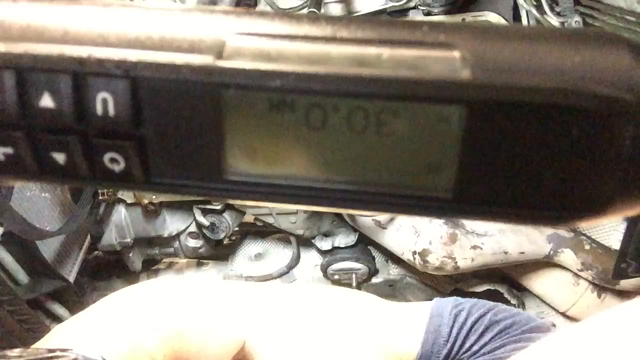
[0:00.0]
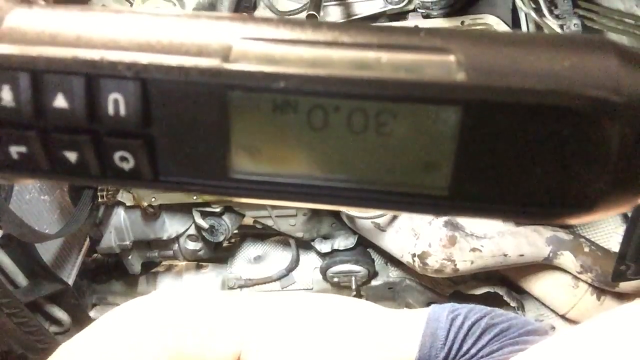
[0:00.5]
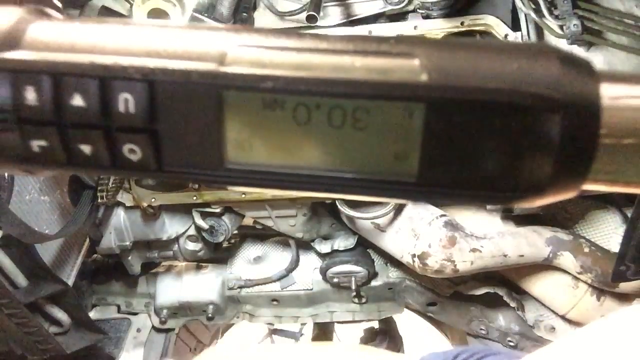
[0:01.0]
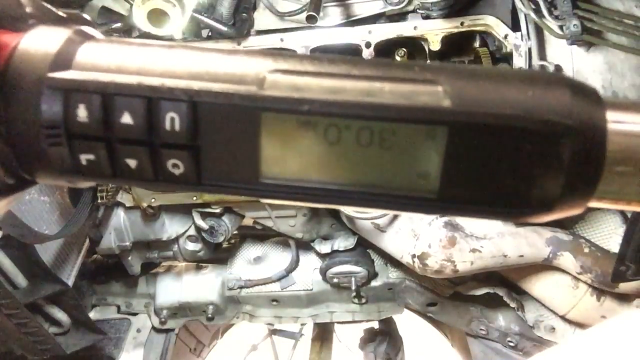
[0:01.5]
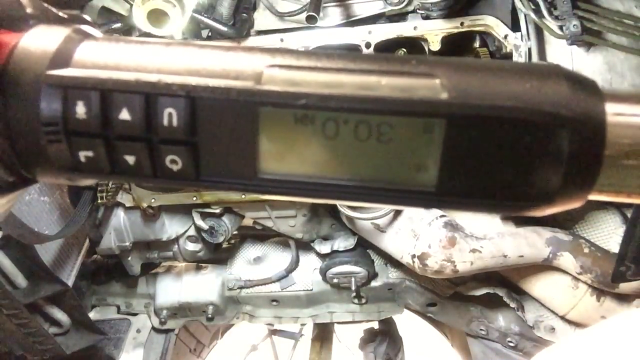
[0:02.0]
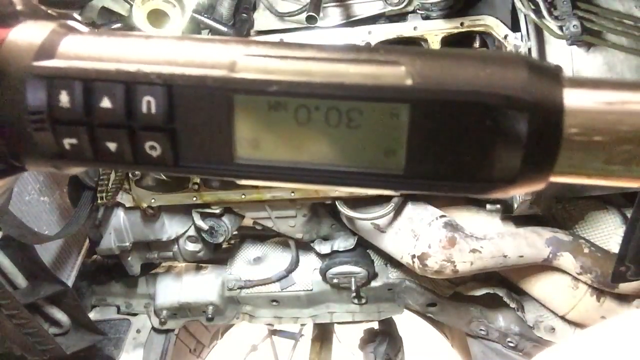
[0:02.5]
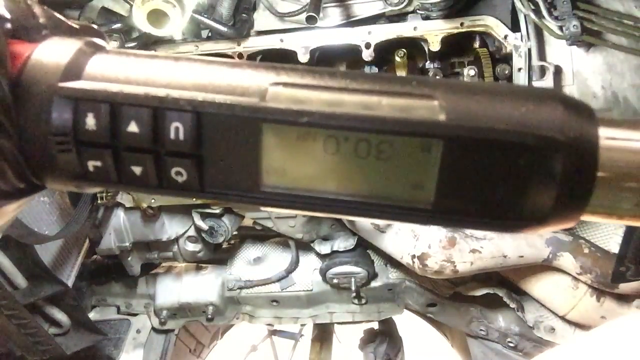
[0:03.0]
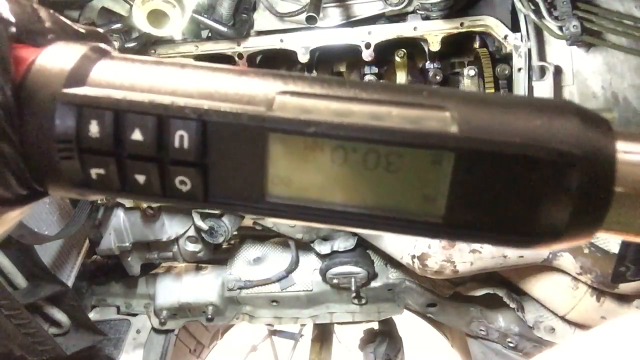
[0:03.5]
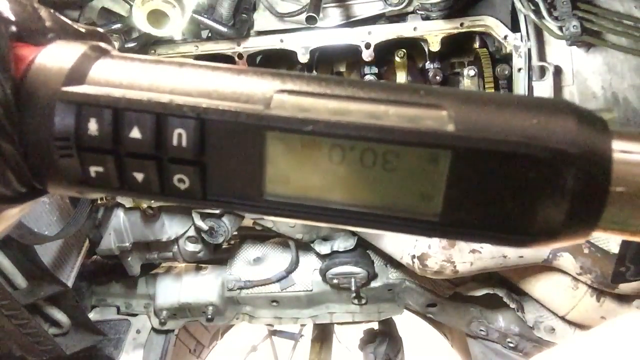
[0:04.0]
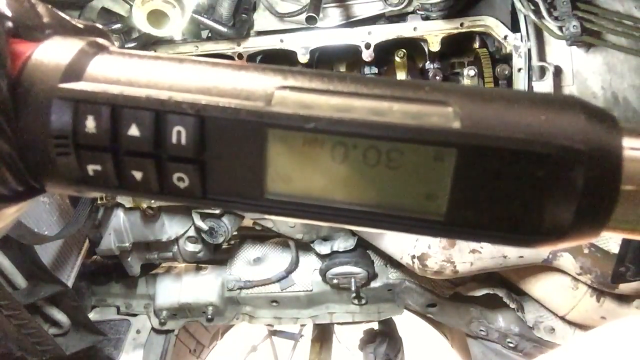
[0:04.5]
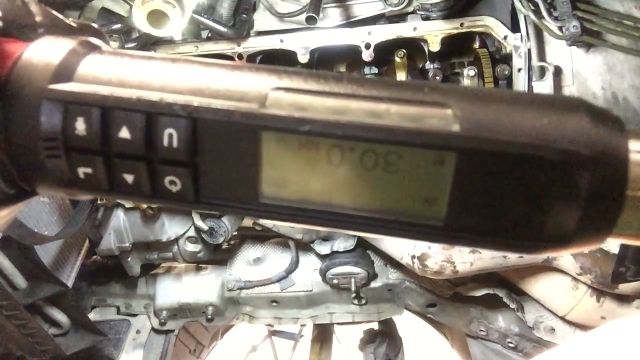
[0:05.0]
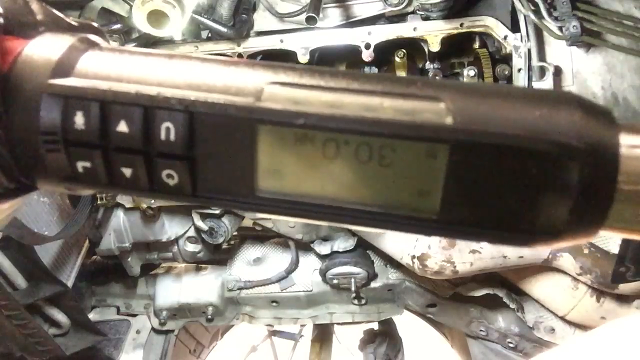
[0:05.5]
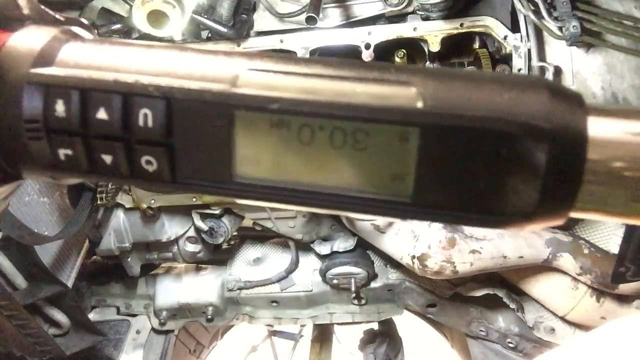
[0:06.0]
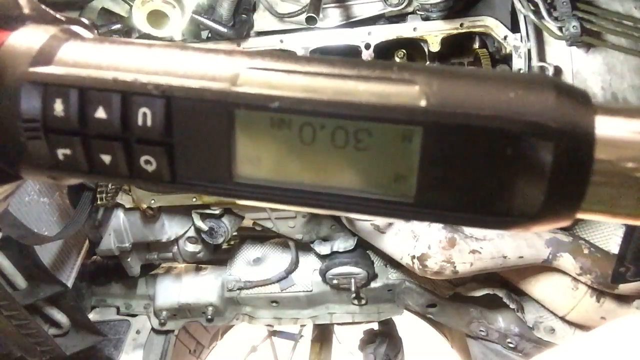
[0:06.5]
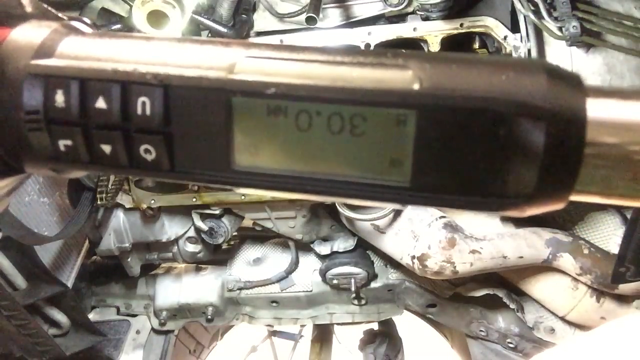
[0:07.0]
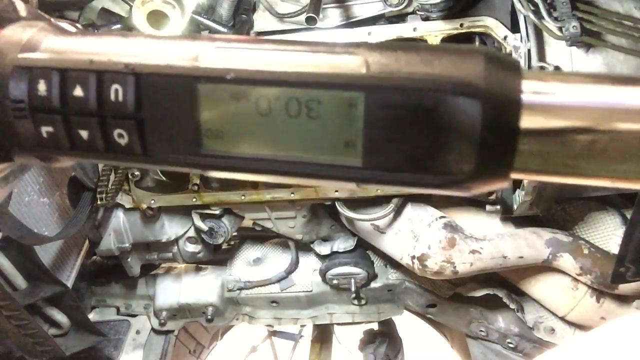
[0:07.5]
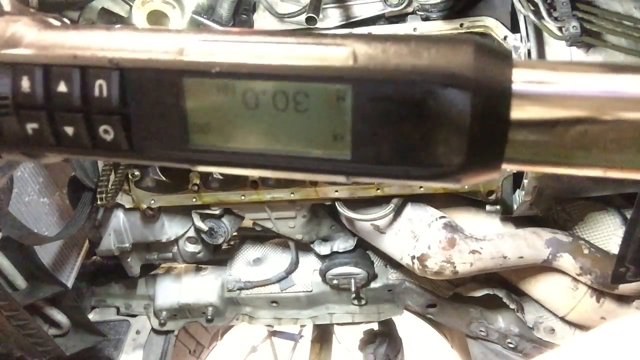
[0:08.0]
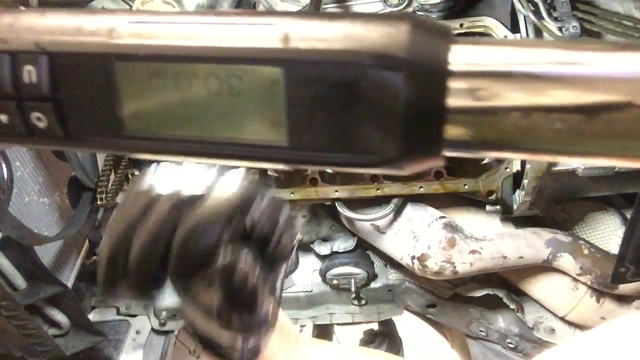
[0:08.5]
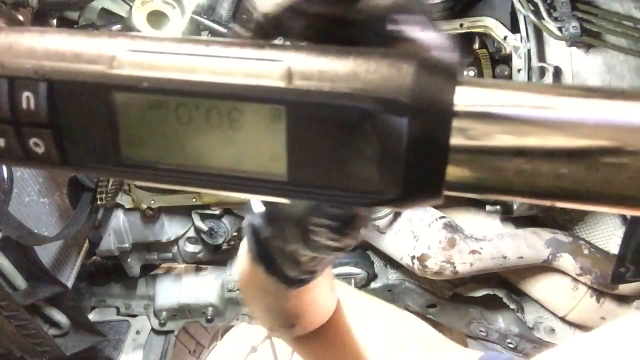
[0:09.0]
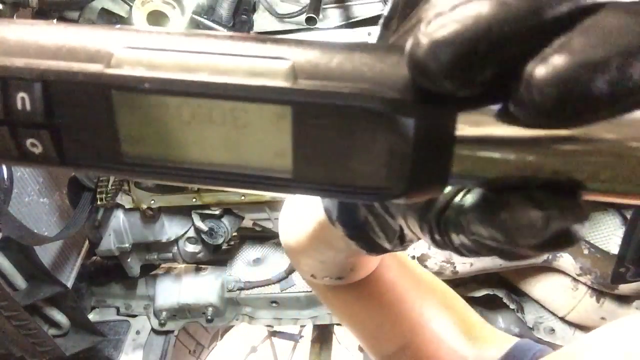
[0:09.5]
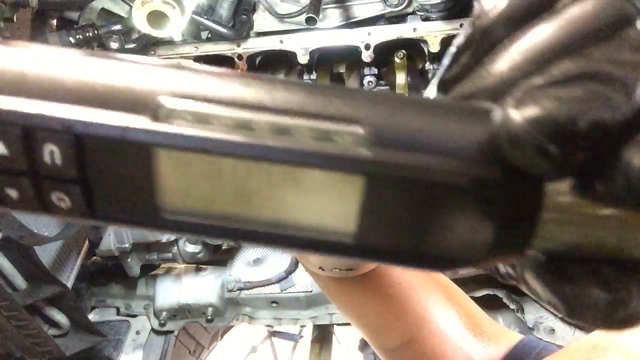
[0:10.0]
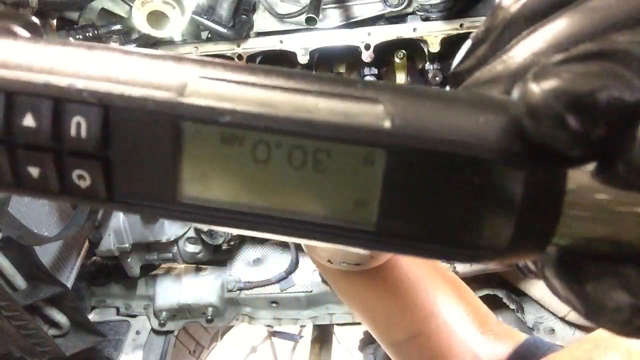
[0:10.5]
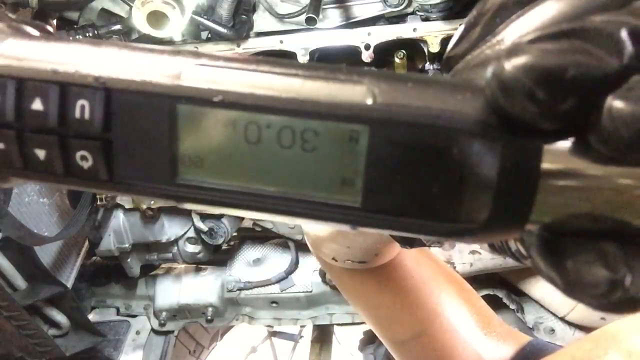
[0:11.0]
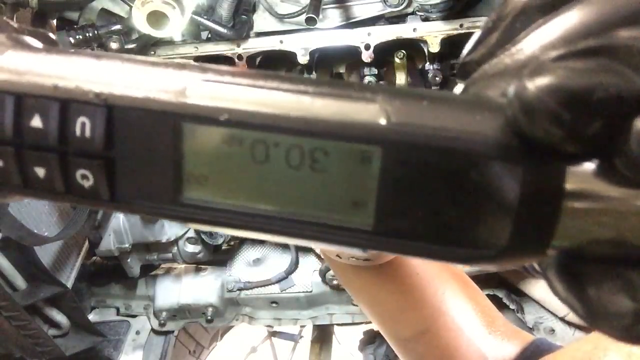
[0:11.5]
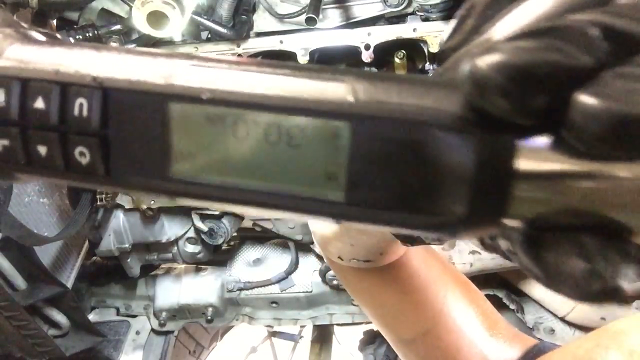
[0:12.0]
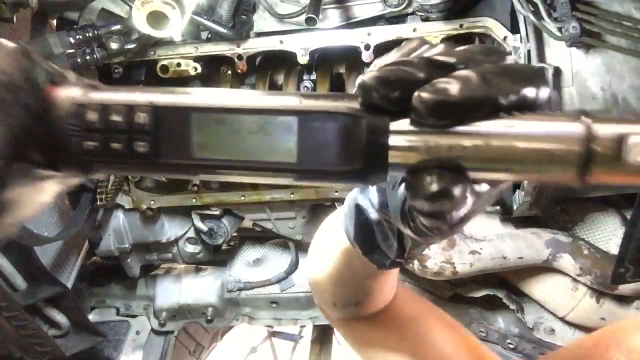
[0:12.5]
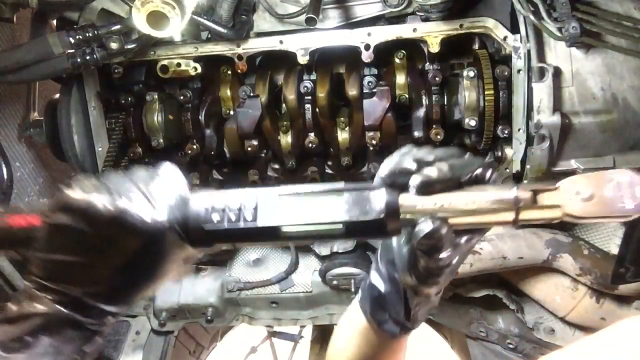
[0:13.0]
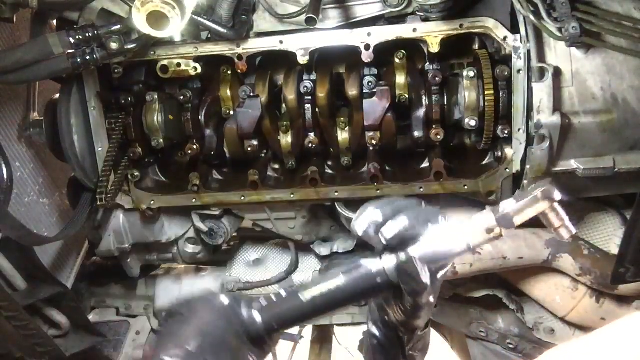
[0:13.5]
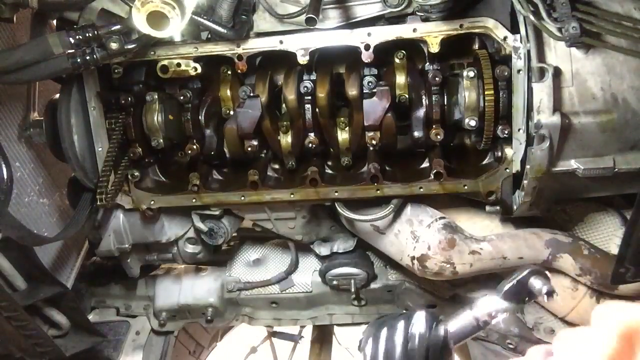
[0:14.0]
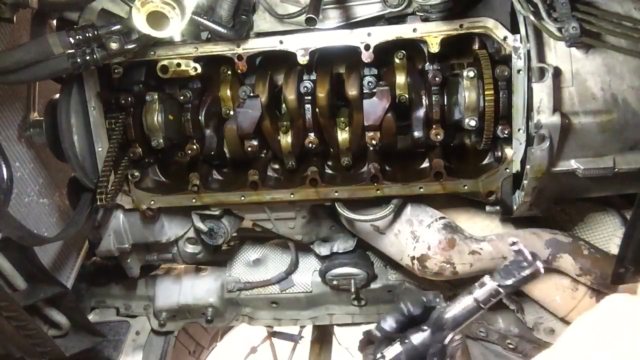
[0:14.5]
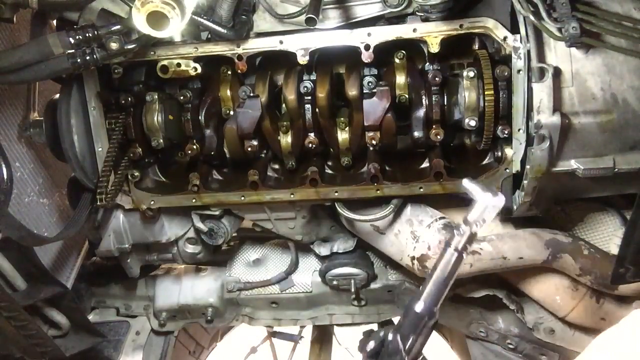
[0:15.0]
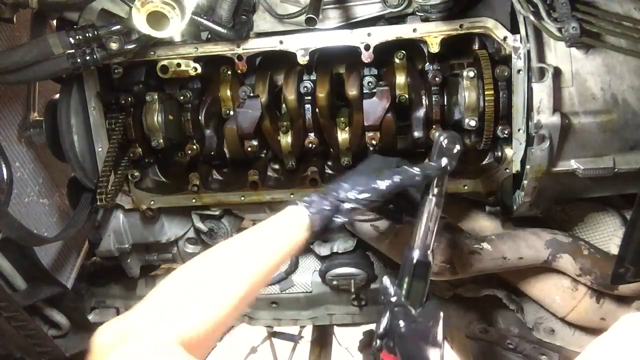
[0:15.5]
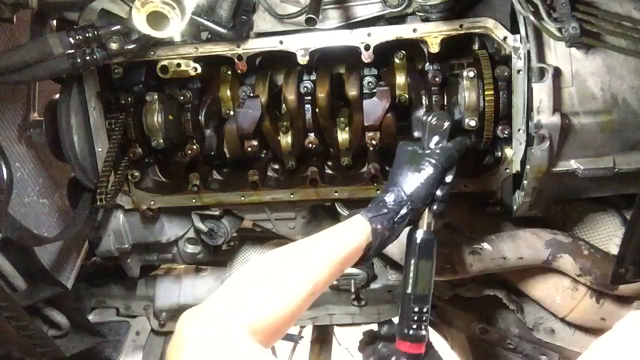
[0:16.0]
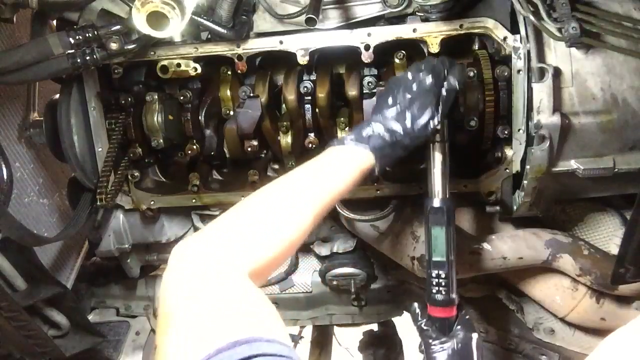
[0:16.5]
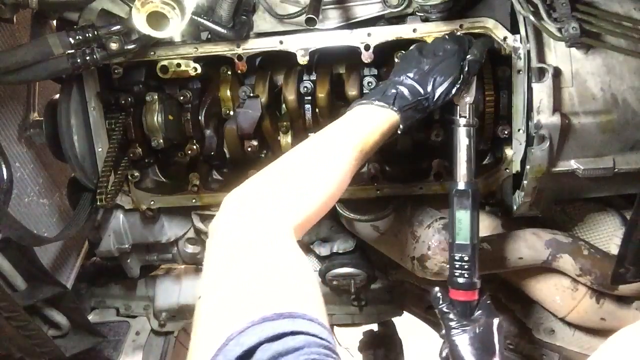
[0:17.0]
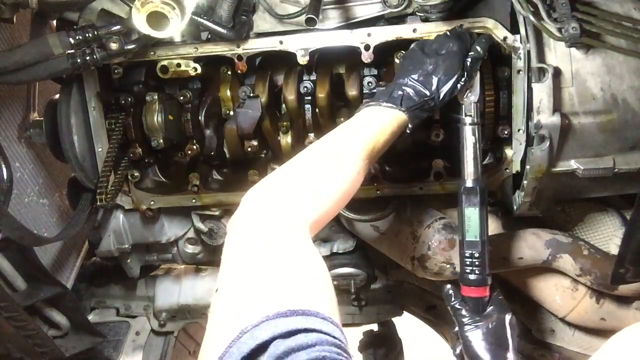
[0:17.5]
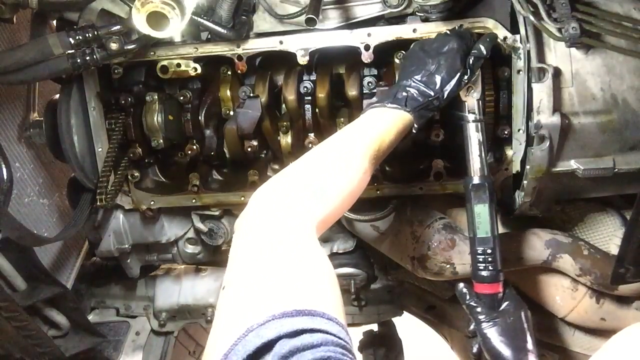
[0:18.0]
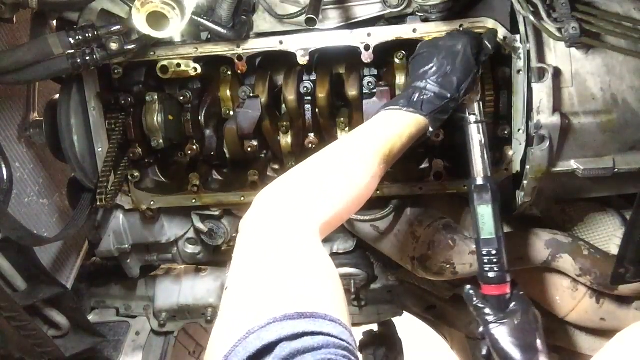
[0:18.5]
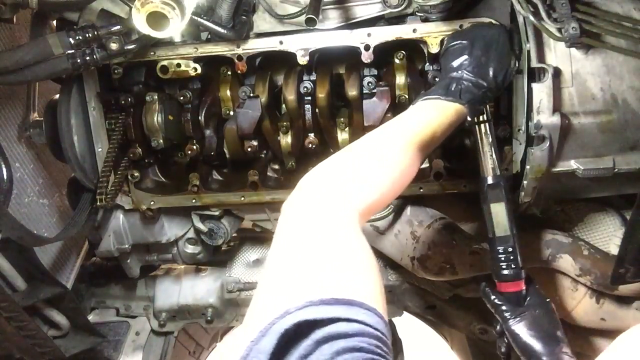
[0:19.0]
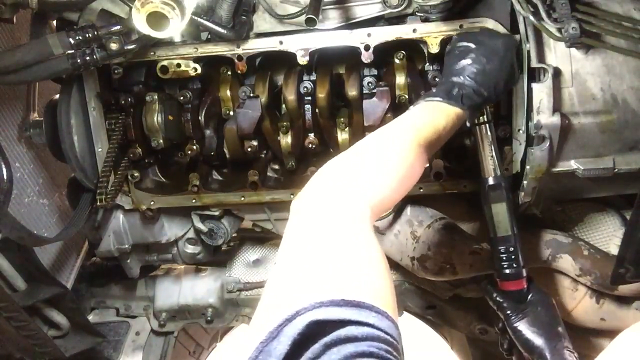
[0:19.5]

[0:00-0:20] In a first-person view, a person records while standing over a large thing that looks like an engine, holding a long, black, kind of cylindrical, rod-shaped object. The object has a display showing a reading that looks like 30, but it is upside down, and on its left-hand side there is a set of buttons. The person wears very shiny black gloves. They lower the device over what looks to be an engine on the ground, connect it to one spot on the engine and start to screw it in. There are six buttons in total; they appear to be up, down, possibly power, what looks like the letter U, a small arrow, and a last one that is hard to discern.